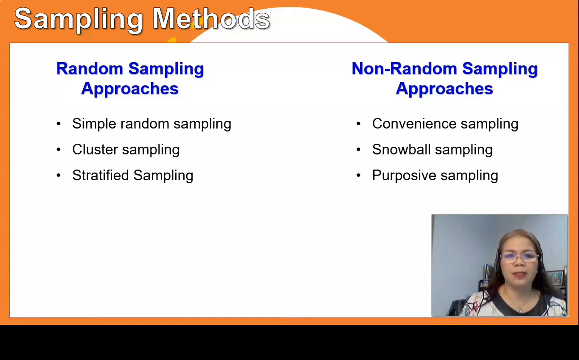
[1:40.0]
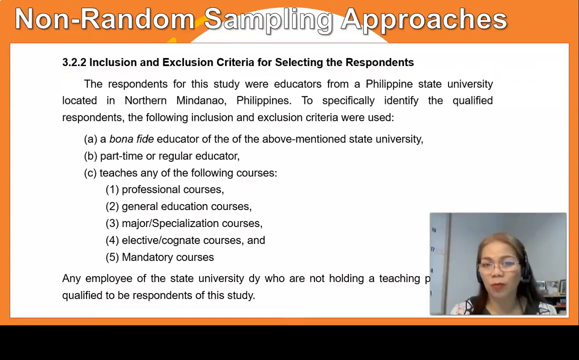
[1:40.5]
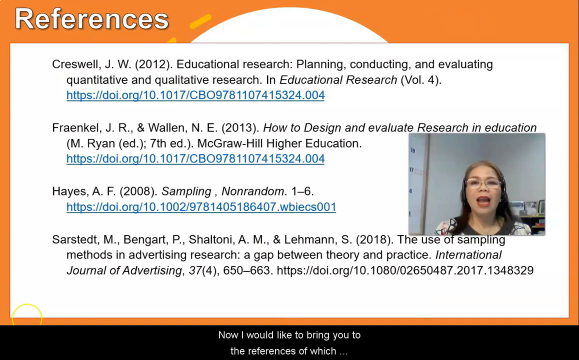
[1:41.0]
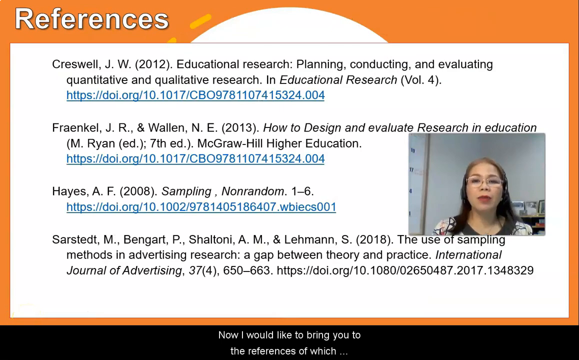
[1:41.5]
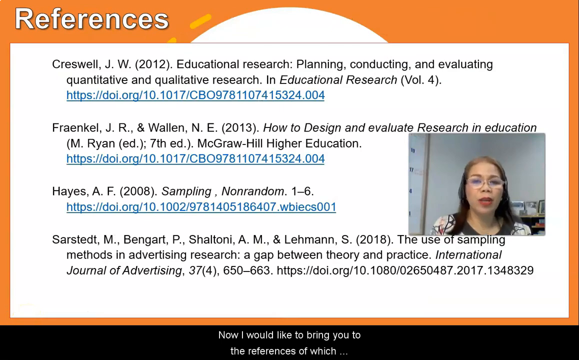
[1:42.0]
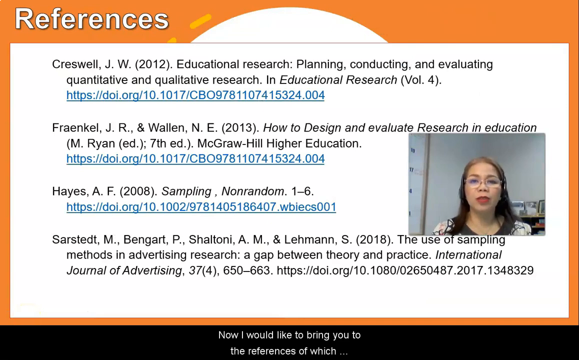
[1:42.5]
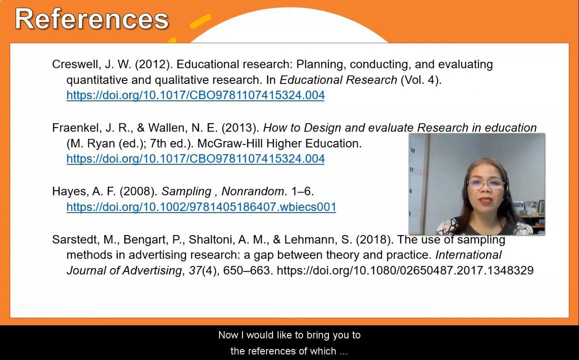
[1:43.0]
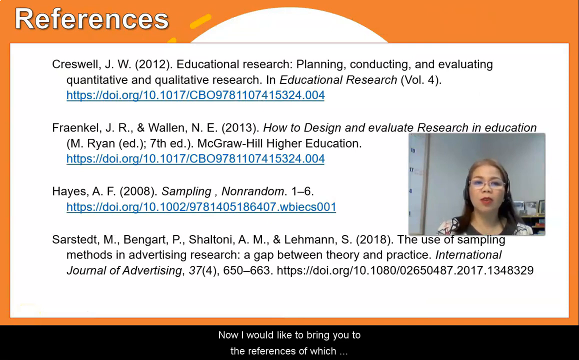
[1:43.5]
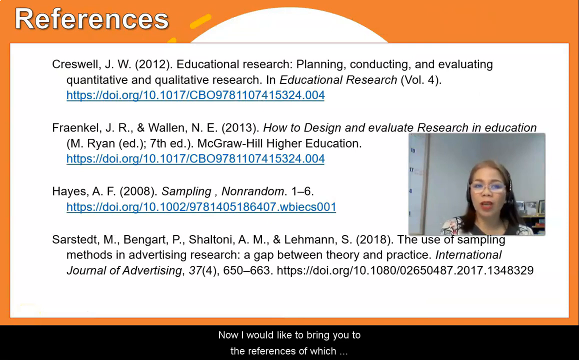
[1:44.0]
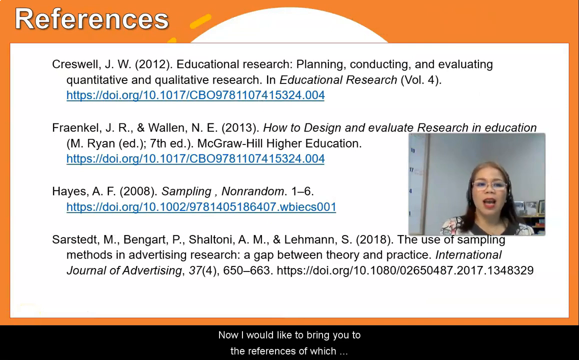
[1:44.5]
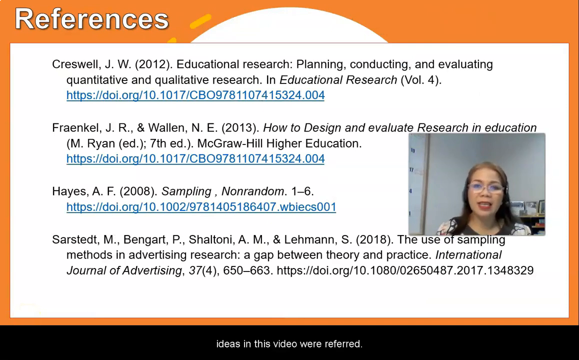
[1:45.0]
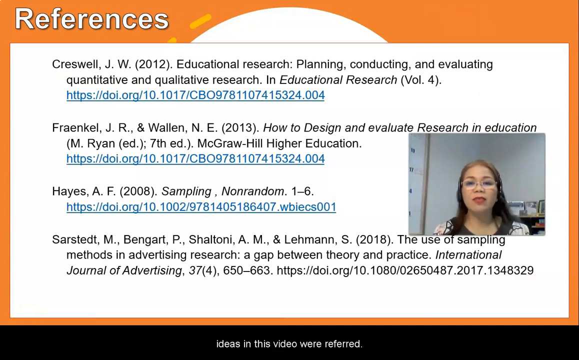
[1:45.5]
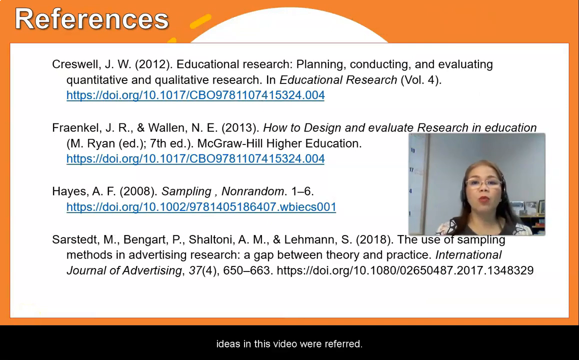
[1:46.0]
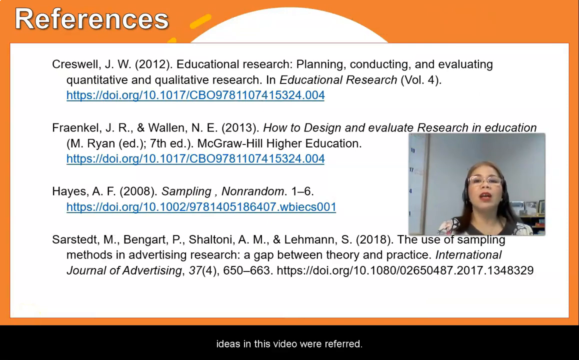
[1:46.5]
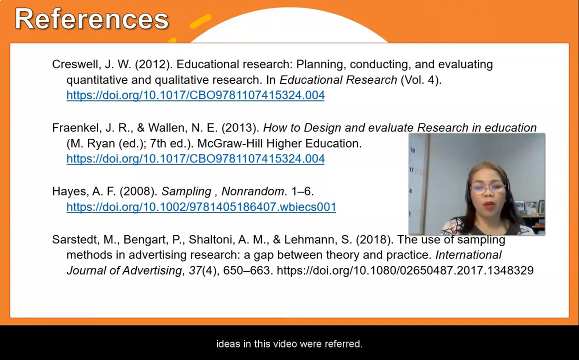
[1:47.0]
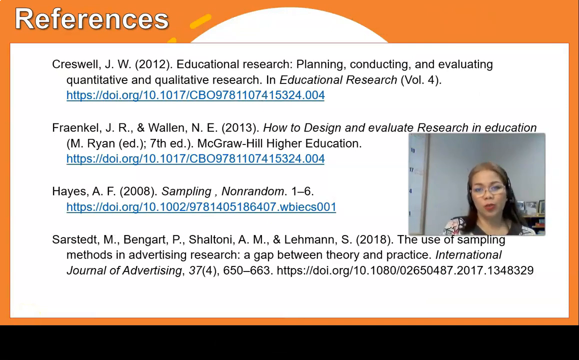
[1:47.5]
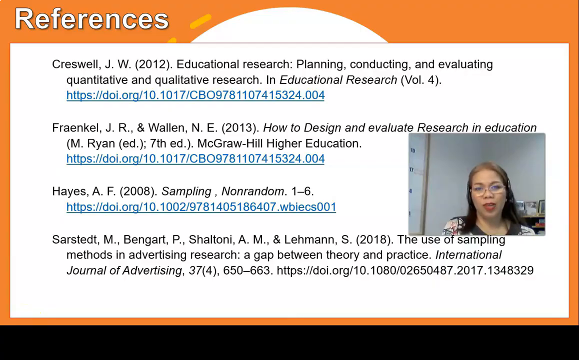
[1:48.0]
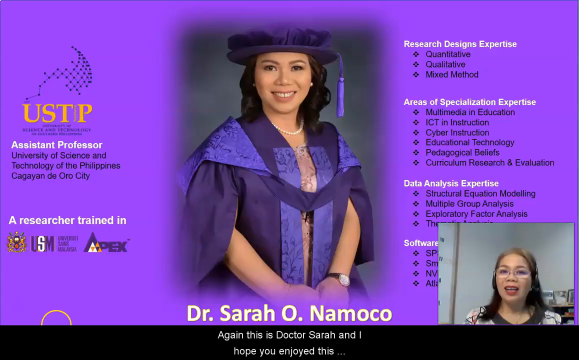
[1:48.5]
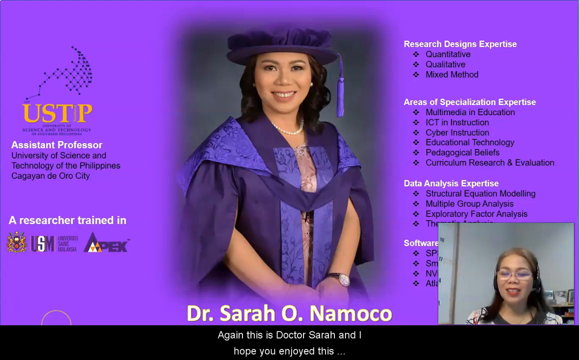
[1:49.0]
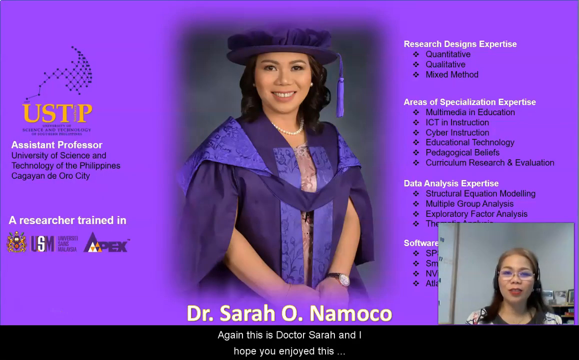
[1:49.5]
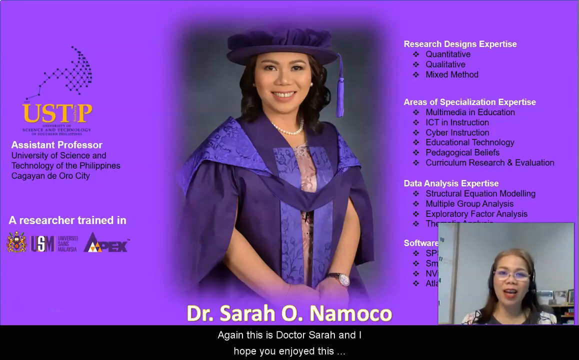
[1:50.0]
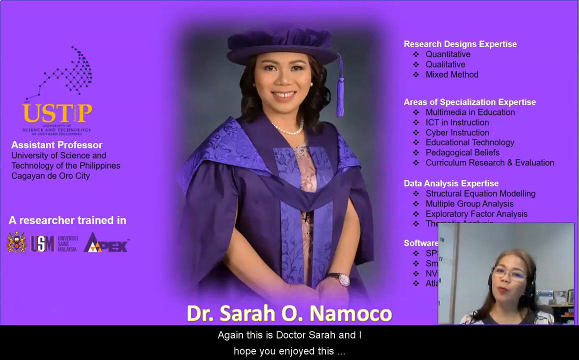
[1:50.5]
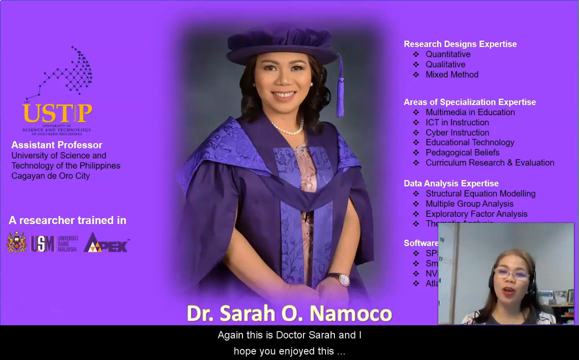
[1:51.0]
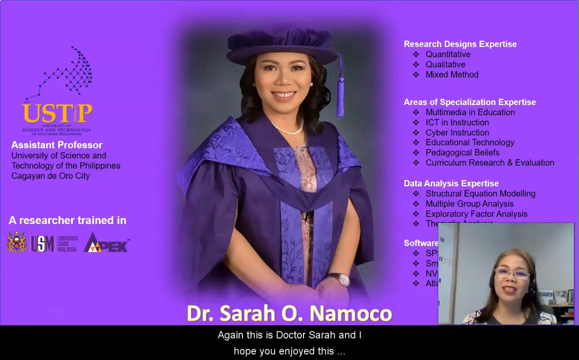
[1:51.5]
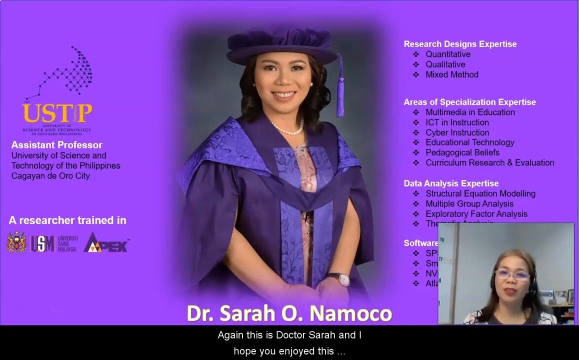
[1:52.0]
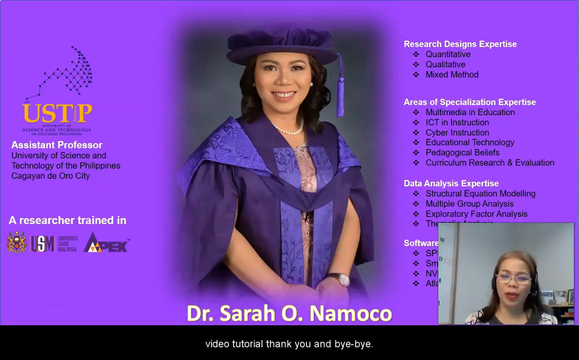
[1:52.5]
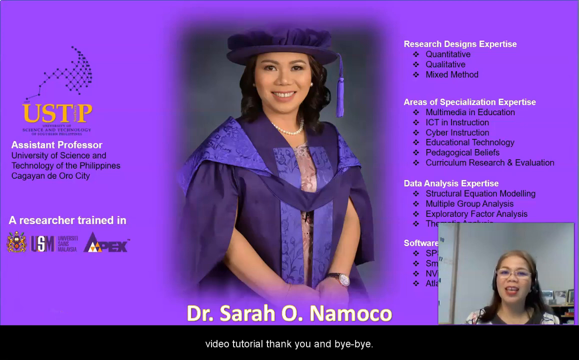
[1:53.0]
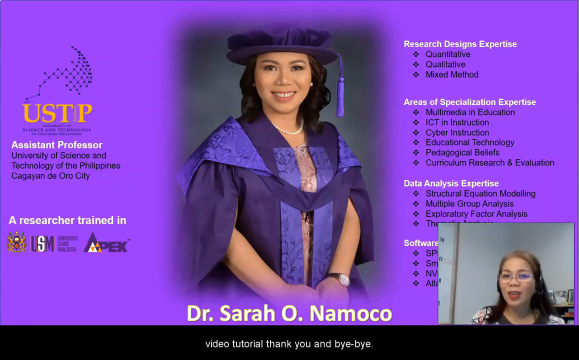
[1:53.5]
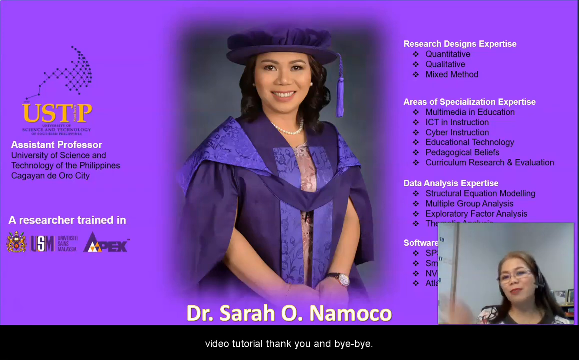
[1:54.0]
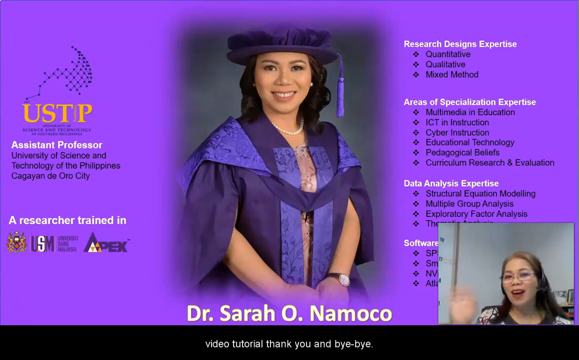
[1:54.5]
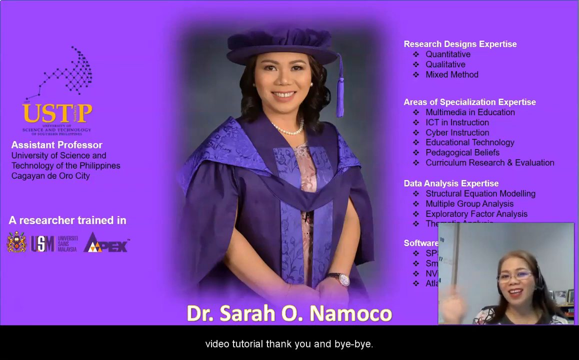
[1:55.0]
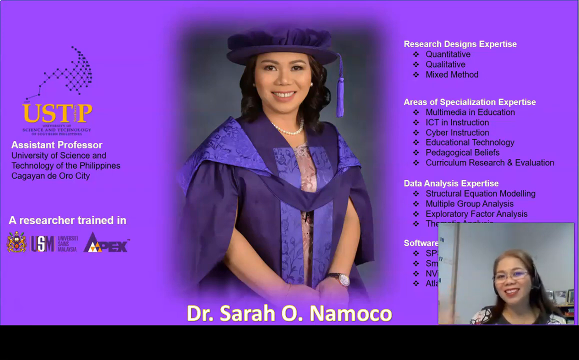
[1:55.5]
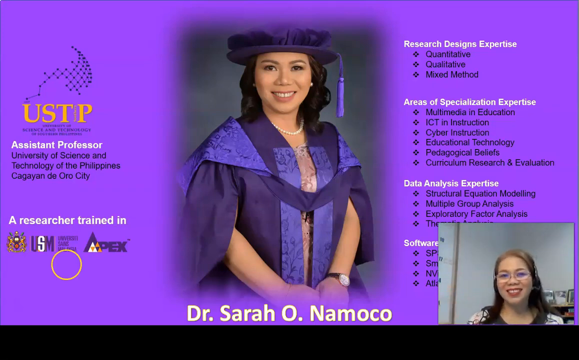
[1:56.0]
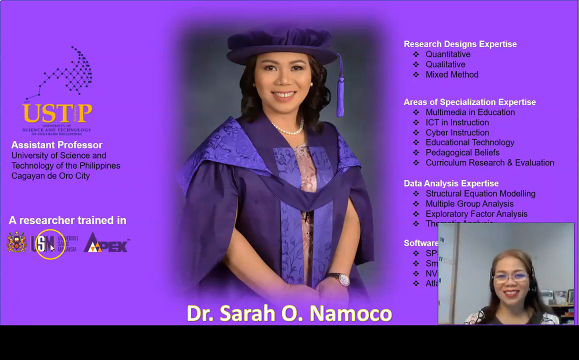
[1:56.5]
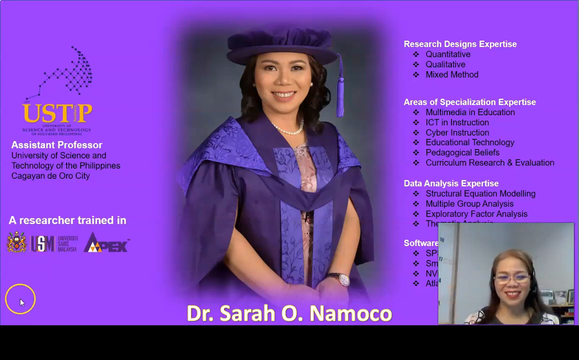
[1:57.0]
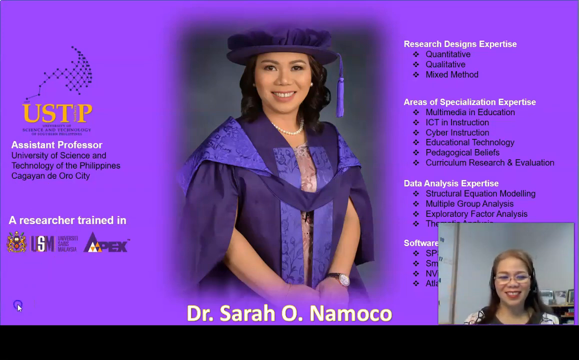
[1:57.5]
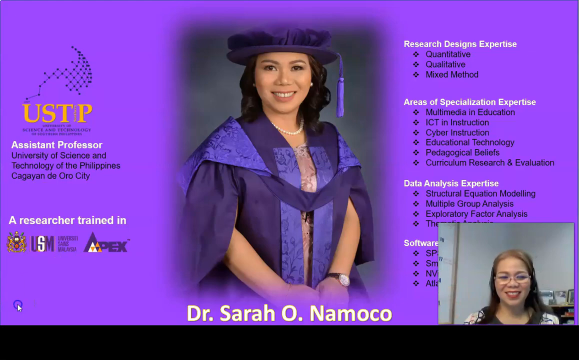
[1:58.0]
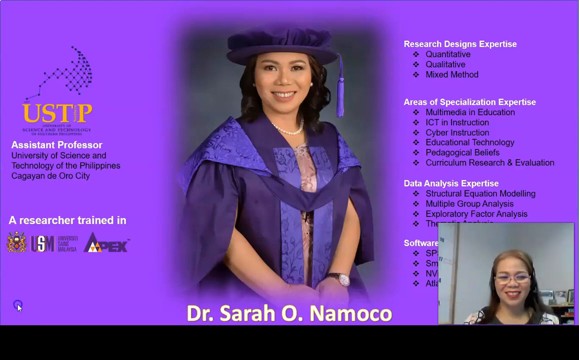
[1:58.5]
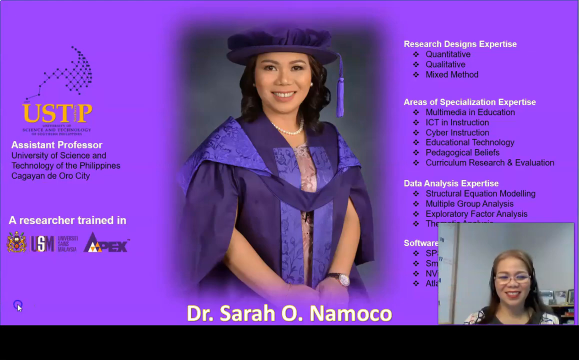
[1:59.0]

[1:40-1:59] The slide titled "Sampling methods" remains, with "Random sampling approaches" and "Non-random sampling approaches" as center-aligned subtitles on the left and right columns. The screen then moves past a slide that is visible for no more than a second before settling on a slide titled "References," showing four references in a hanging indent format. Dr. Serra's webcam overlay is now closer to the center of the right side of the screen. The screen then transitions to a purple backdrop with the same graduation photo in the center and the text "Dr. Serra Onumoku" in white underneath it. On the left side are the logo for USTP and her title, "Assistant Professor"; on the right side, bullet points and subtitles detail her research designs experience, areas of specialization expertise, data analysis expertise, and software. She speaks slowly in the bottom right corner, then waves to the camera with her right hand as the video ends.